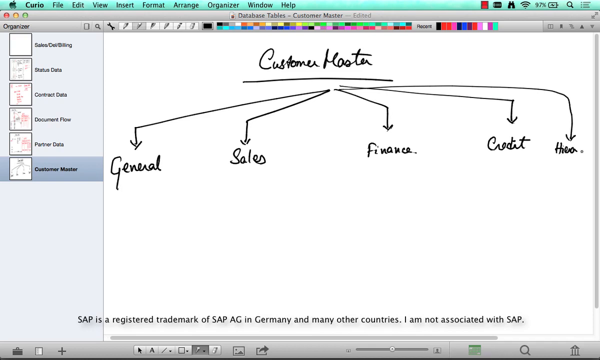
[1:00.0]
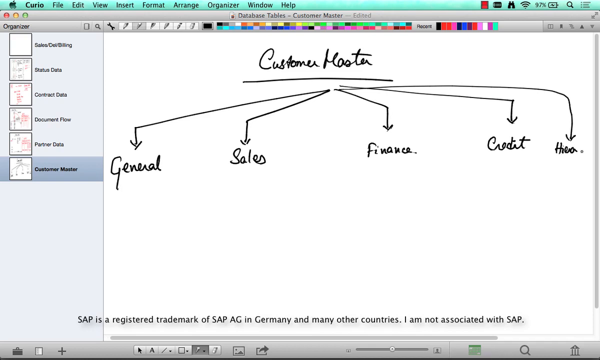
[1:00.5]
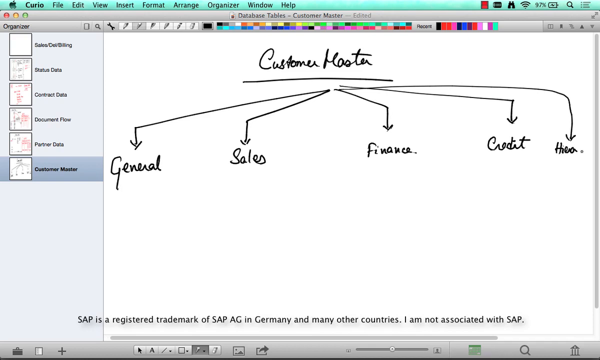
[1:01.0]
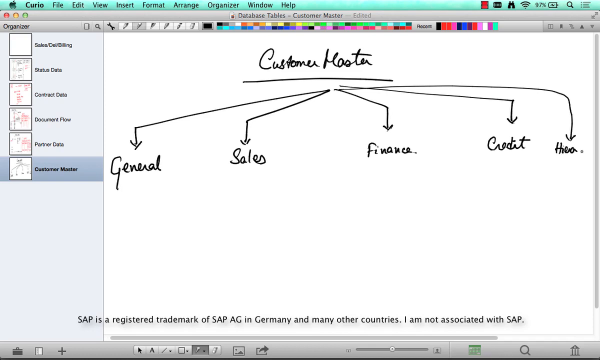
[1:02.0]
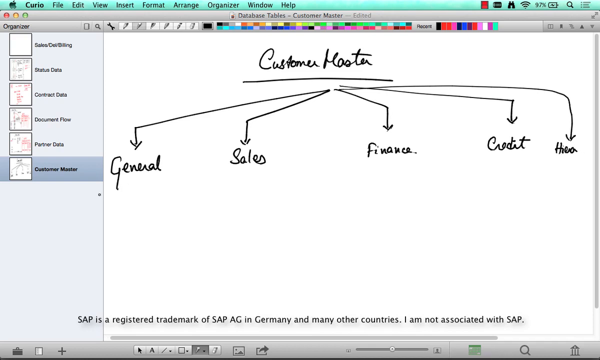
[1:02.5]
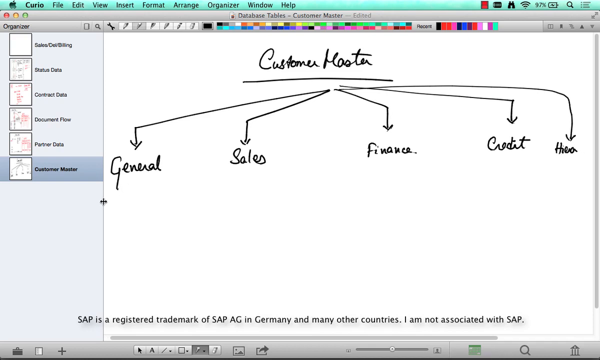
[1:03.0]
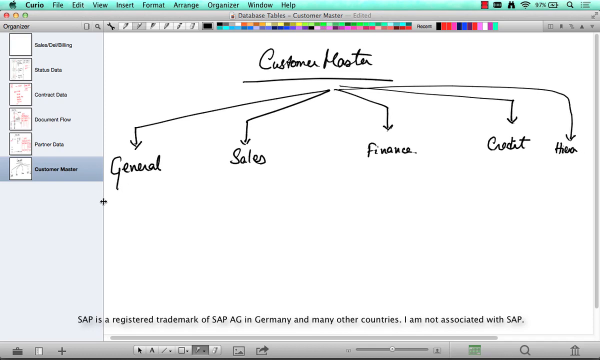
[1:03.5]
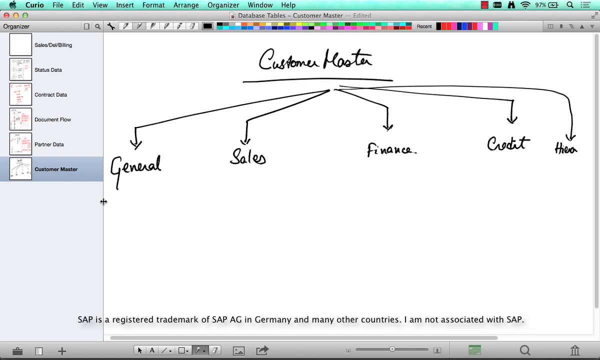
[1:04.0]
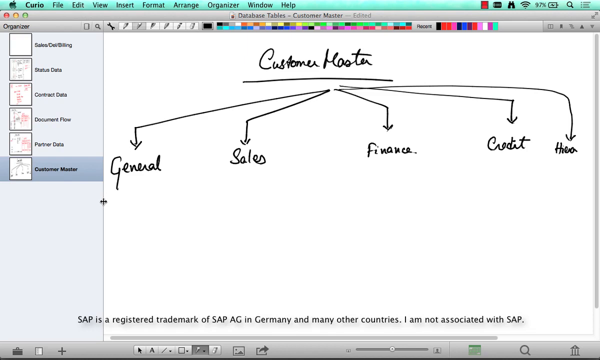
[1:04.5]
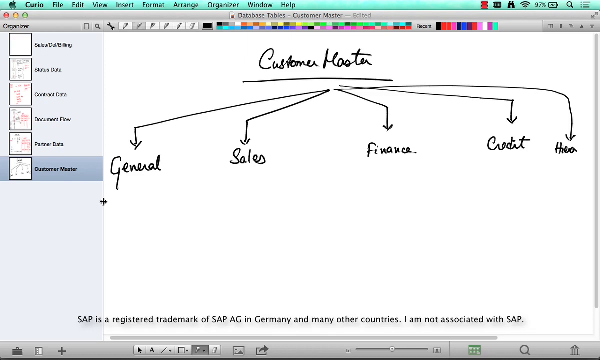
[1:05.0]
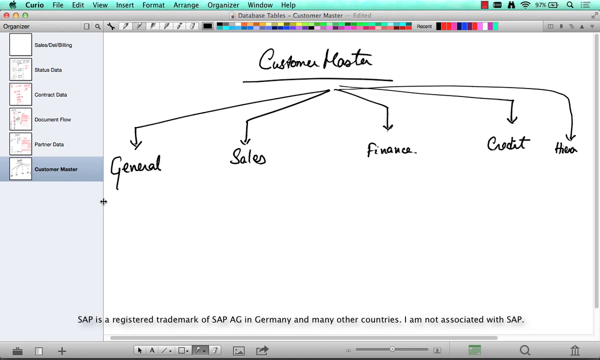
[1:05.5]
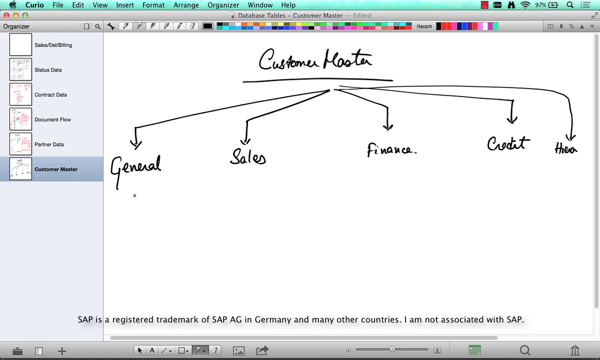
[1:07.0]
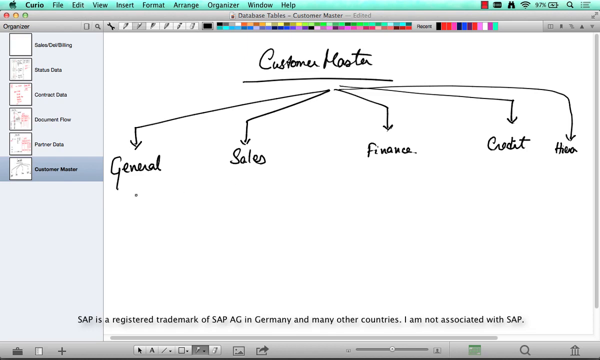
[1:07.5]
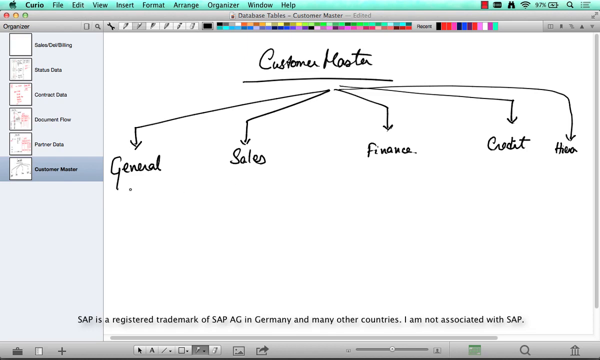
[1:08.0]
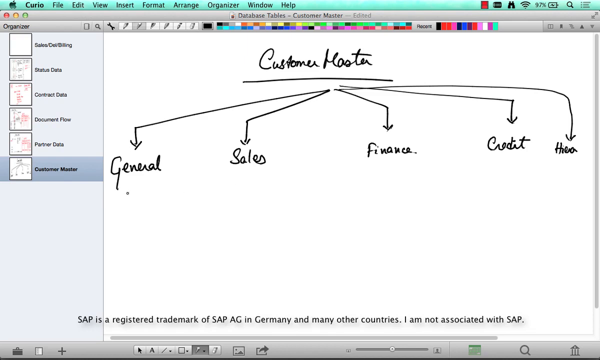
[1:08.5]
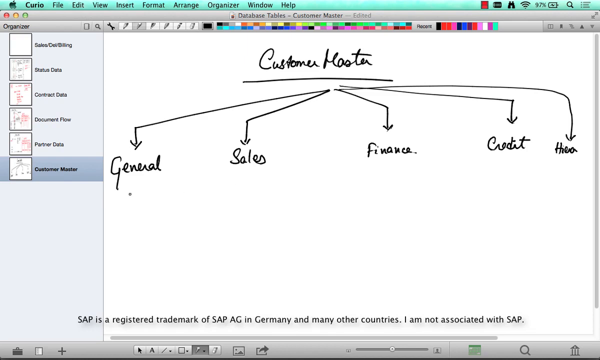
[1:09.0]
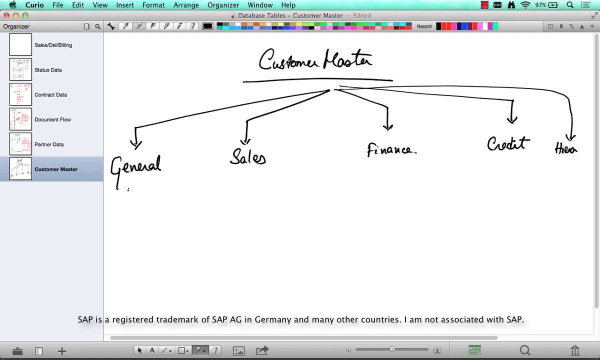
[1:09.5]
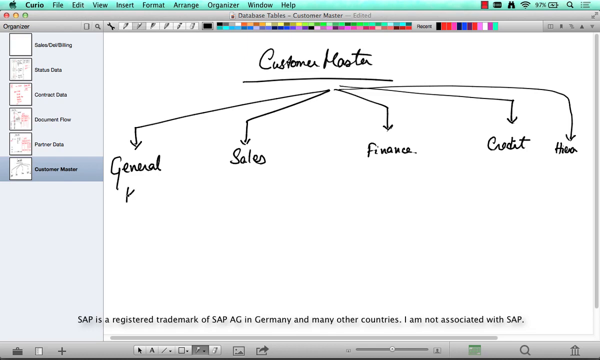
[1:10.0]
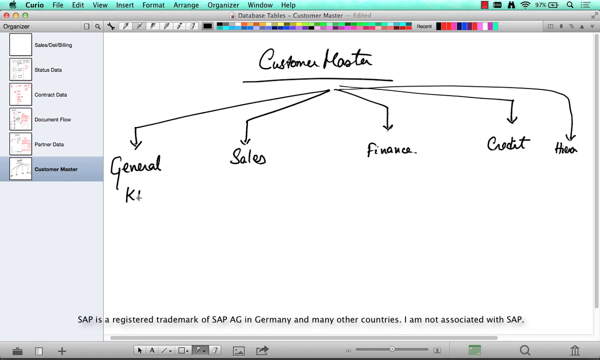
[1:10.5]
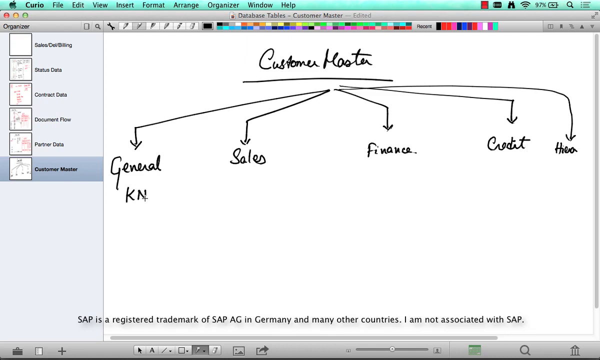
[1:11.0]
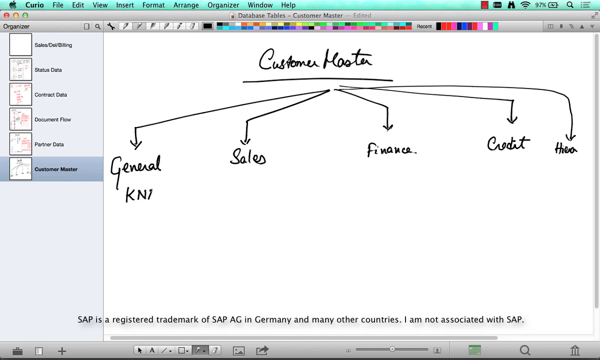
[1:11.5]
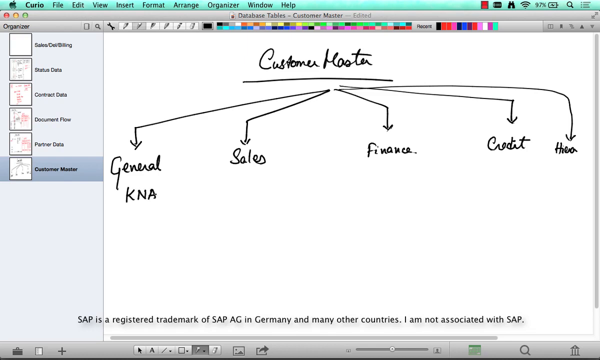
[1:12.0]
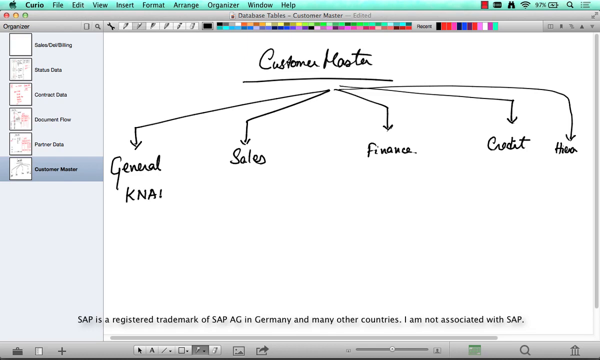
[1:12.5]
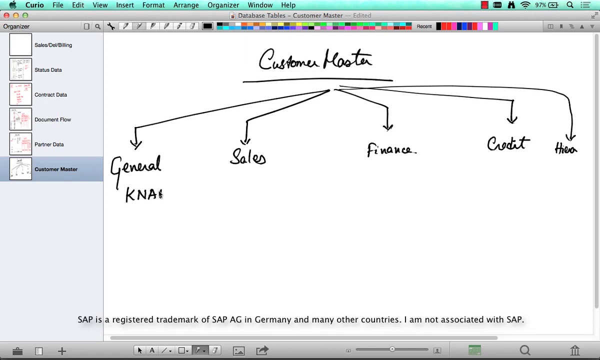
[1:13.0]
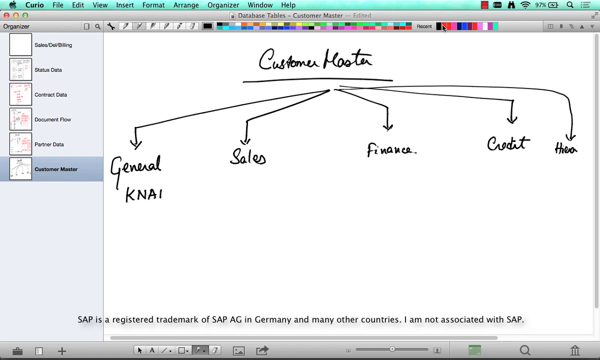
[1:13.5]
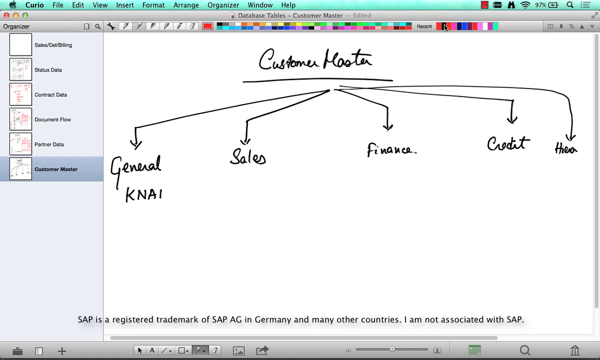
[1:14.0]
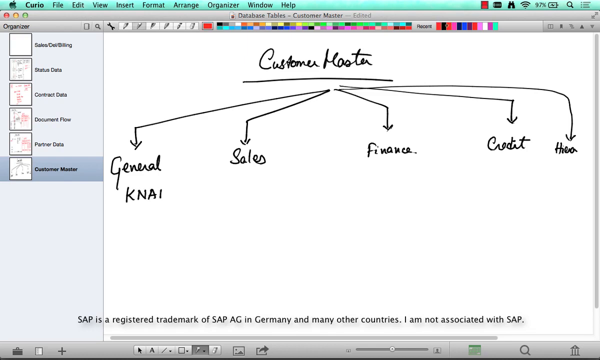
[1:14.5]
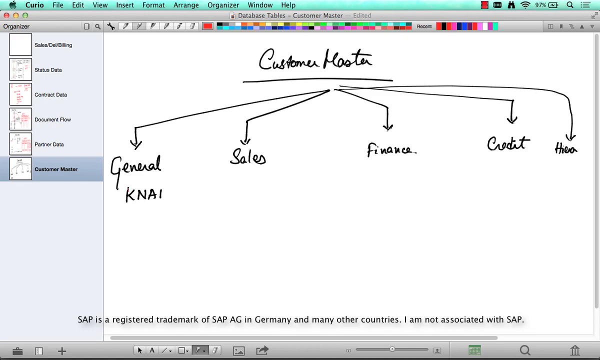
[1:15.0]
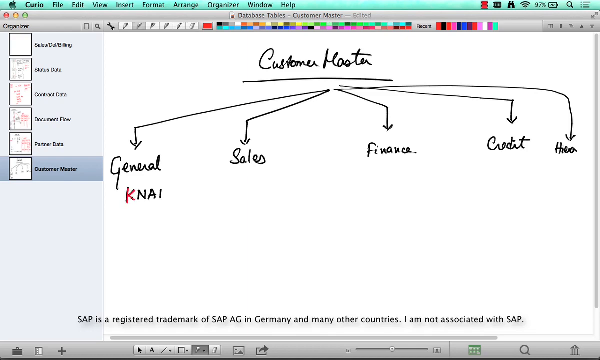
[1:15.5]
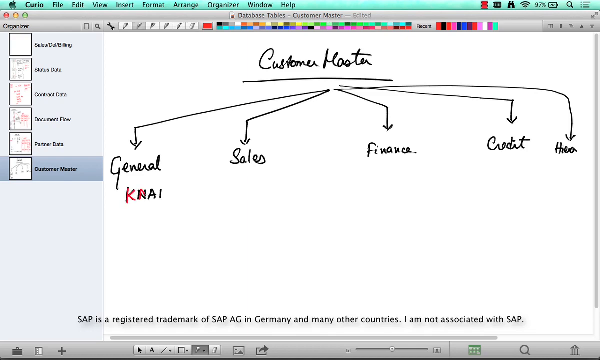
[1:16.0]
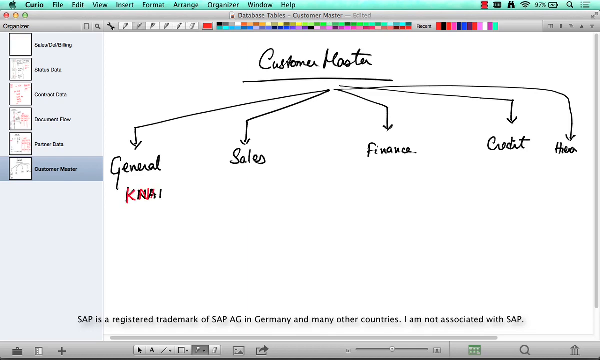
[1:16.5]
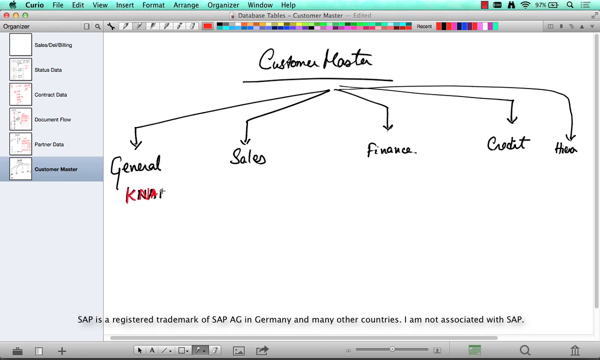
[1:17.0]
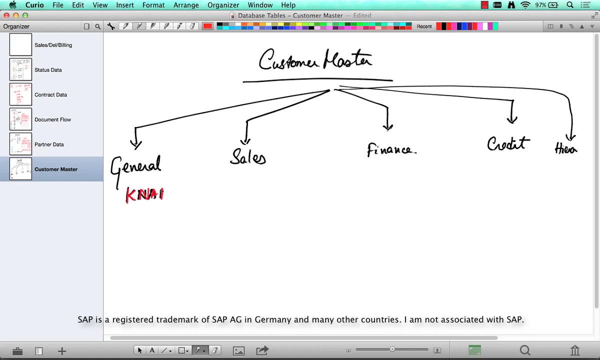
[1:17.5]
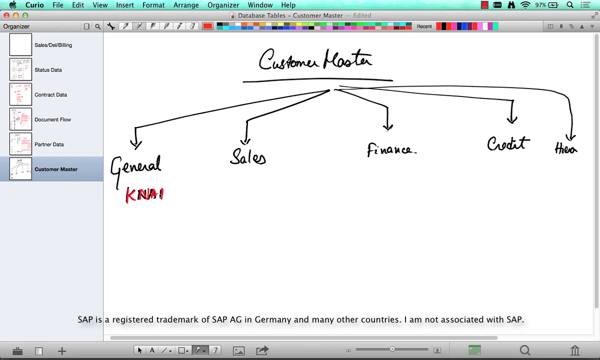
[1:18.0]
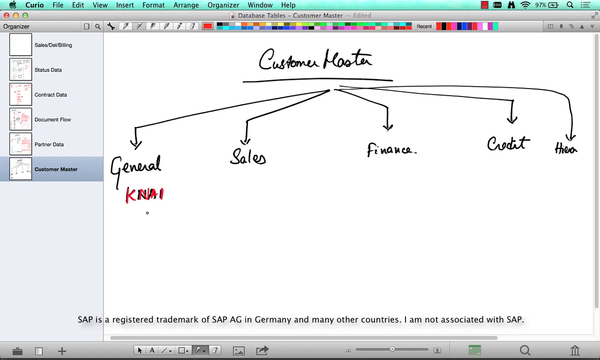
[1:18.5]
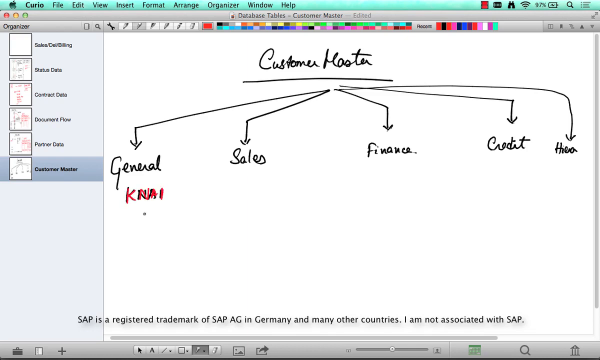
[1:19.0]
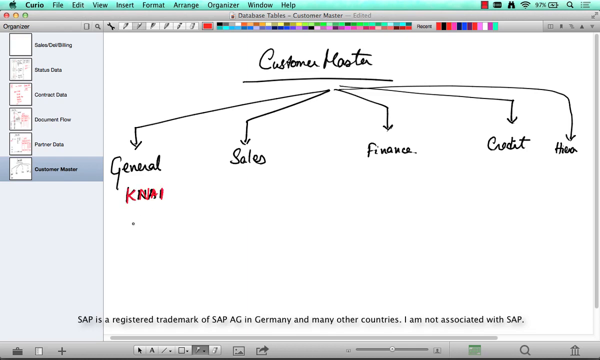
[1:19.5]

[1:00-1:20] On the very right, something hard to see is written that kind of looks like the word "HEA". Right underneath the word general, "KNAI" is written, first in black and then overwritten with a red pen, so both colors show, with black underneath. KNAI is in all capital letters, spaced a bit farther apart than the other words, which are connected like cursive handwriting, so these letters look distinct and separate. The red overlap is a little messy and both layers of color are clearly visible. Overall the page is still very white and empty.